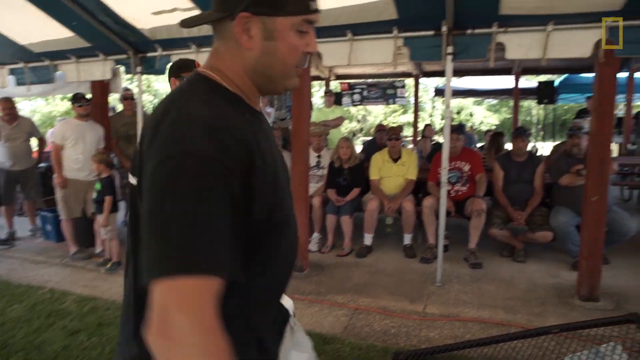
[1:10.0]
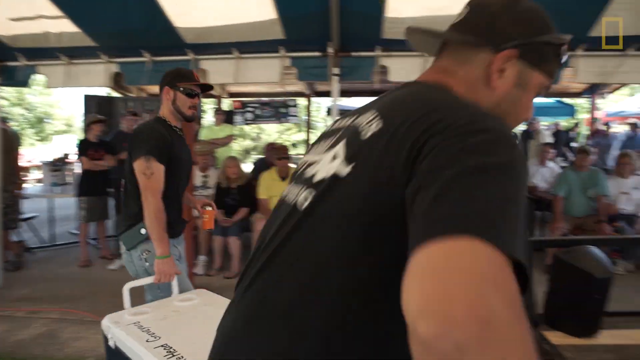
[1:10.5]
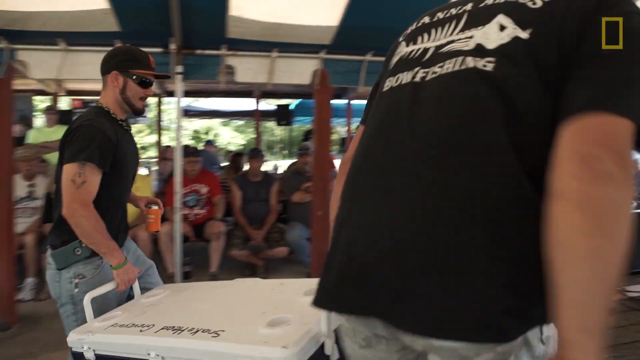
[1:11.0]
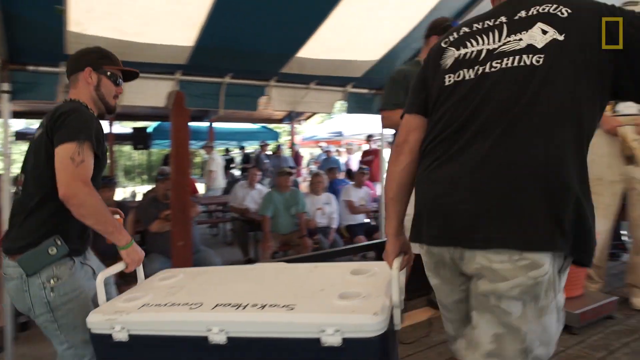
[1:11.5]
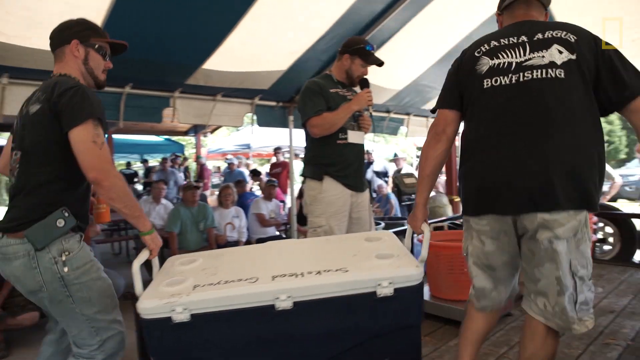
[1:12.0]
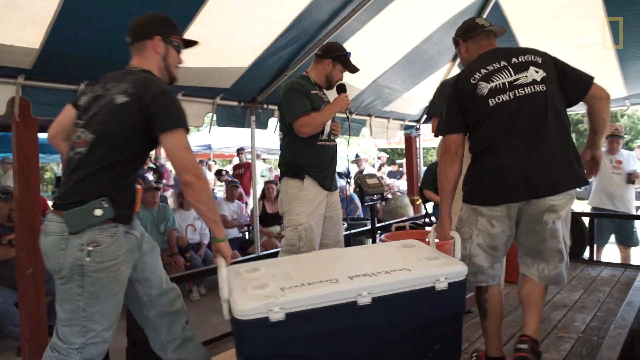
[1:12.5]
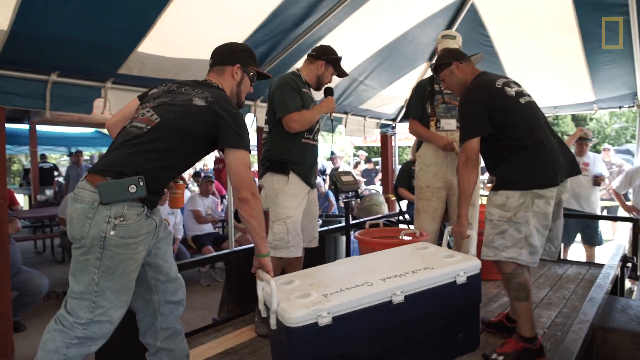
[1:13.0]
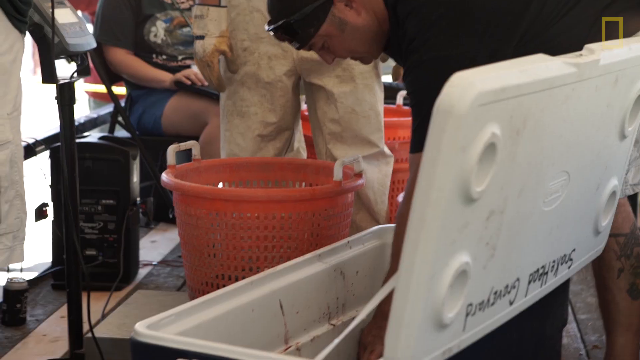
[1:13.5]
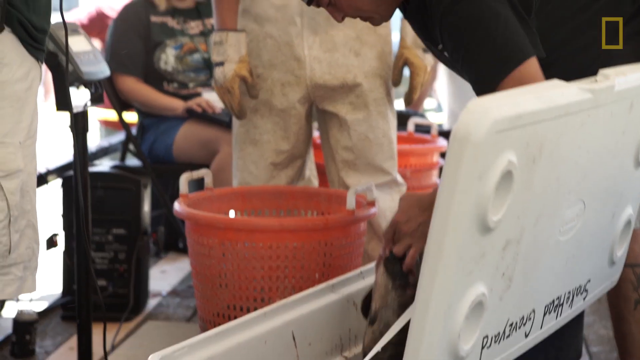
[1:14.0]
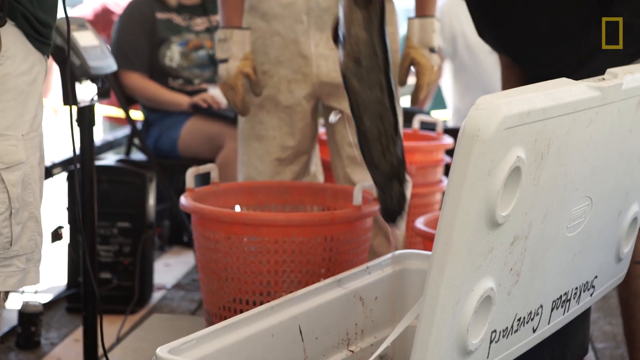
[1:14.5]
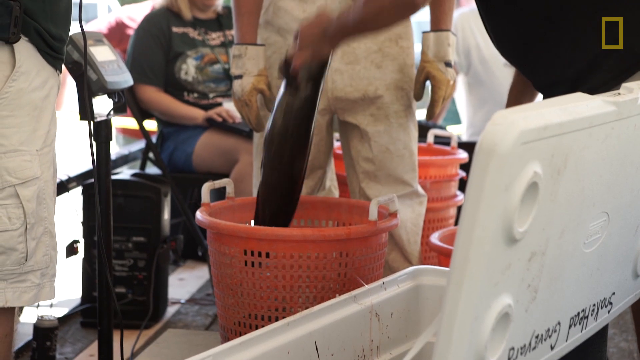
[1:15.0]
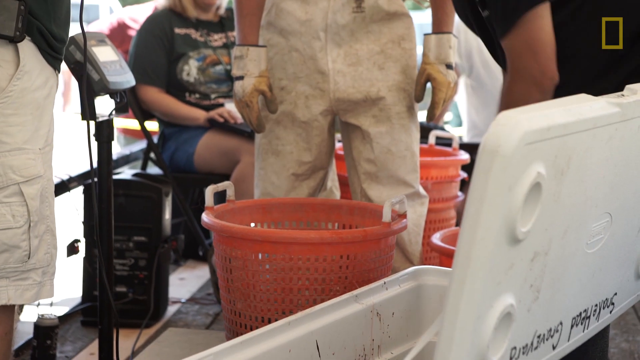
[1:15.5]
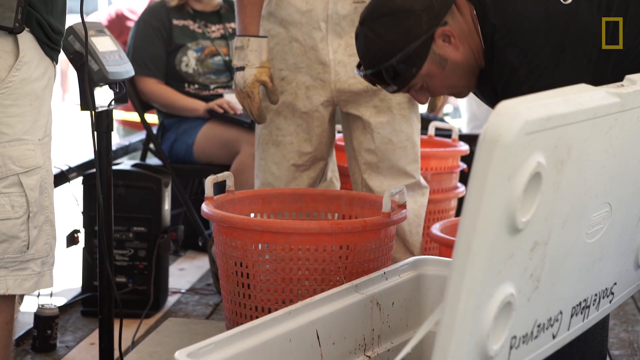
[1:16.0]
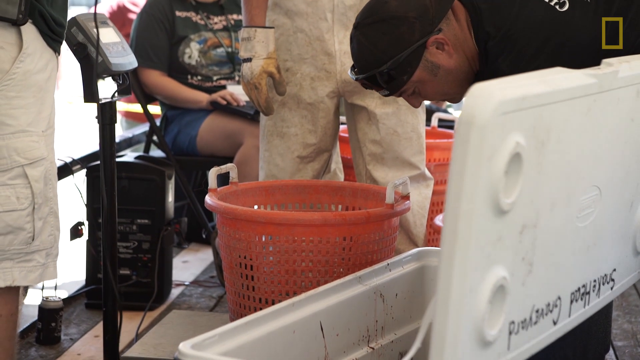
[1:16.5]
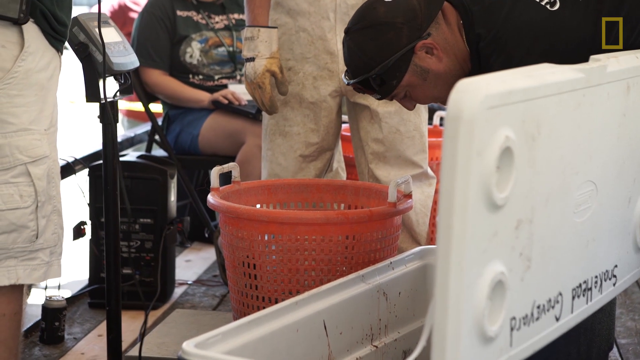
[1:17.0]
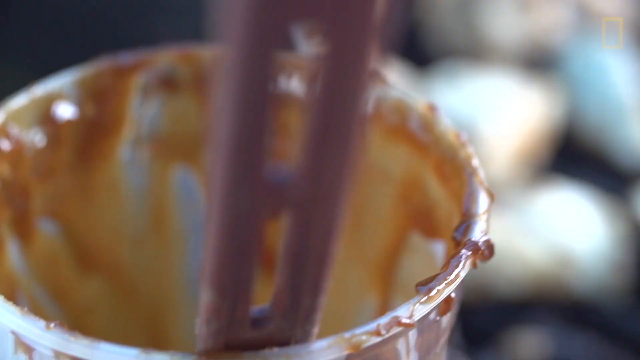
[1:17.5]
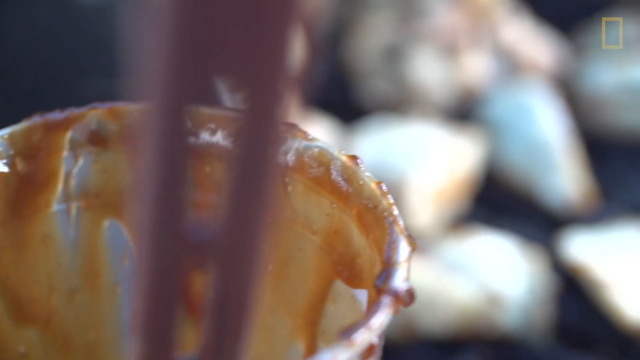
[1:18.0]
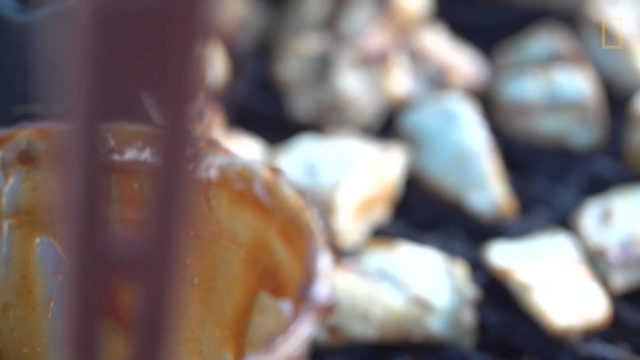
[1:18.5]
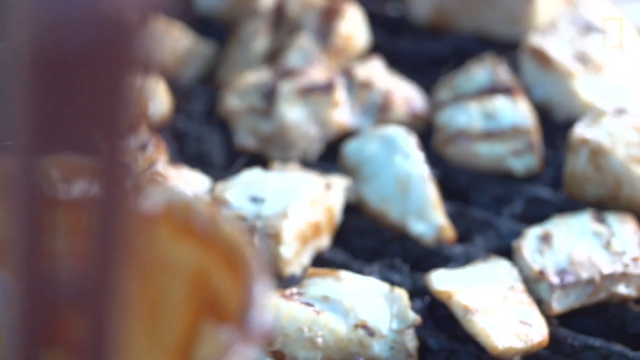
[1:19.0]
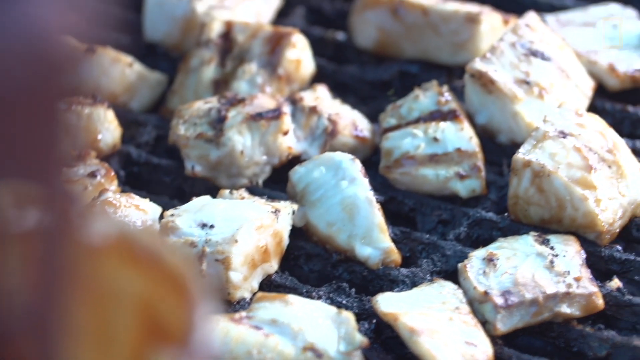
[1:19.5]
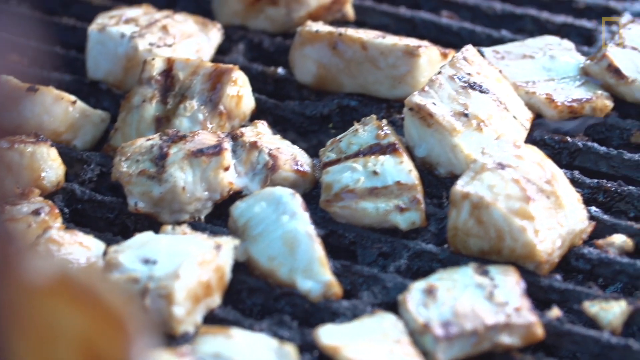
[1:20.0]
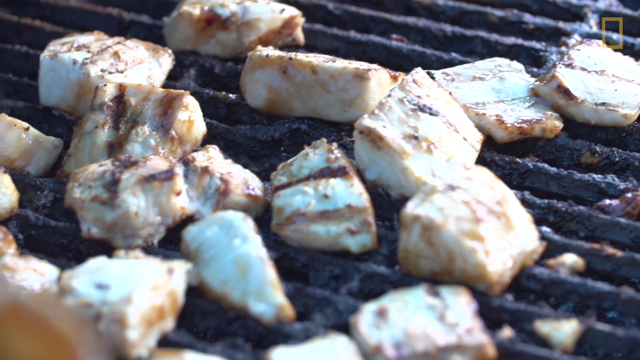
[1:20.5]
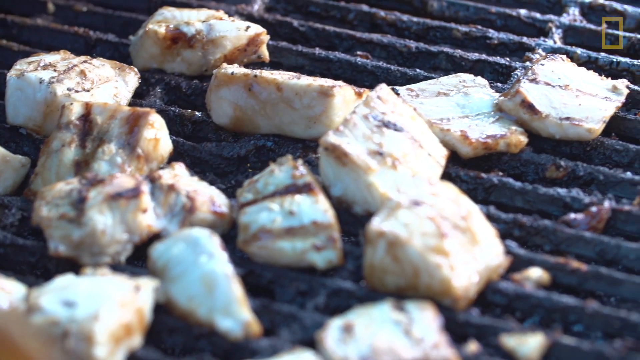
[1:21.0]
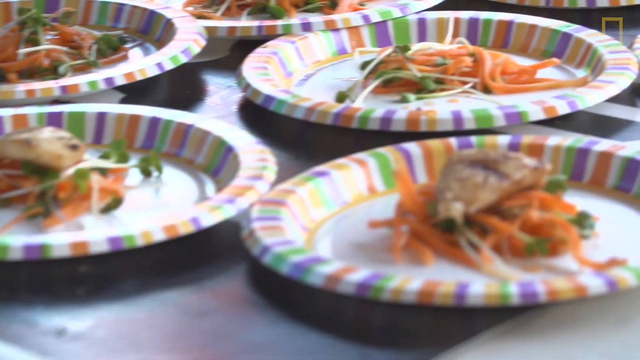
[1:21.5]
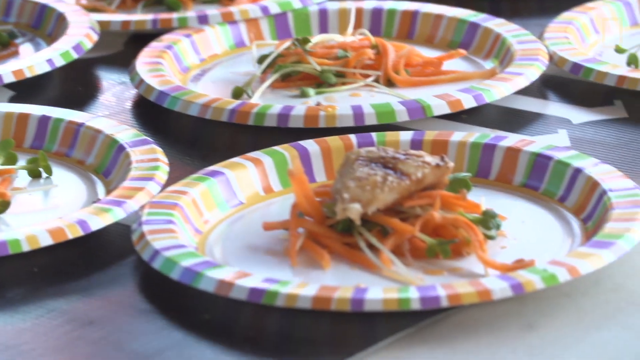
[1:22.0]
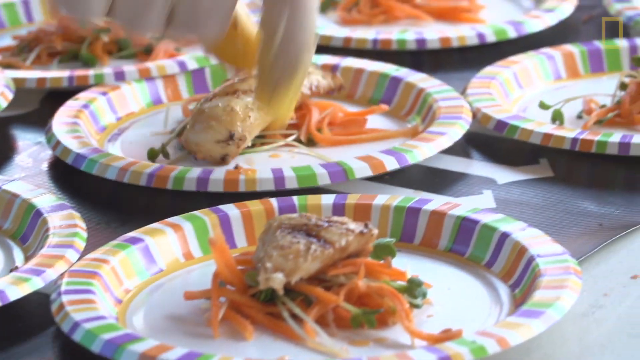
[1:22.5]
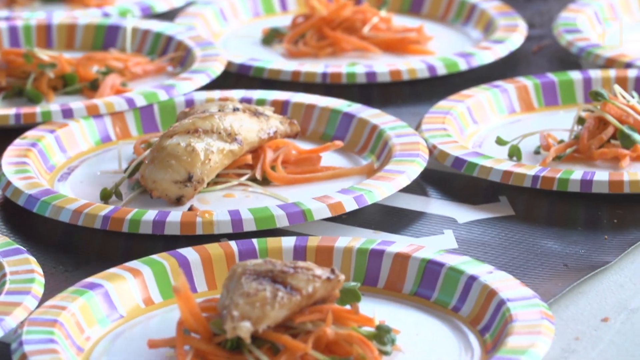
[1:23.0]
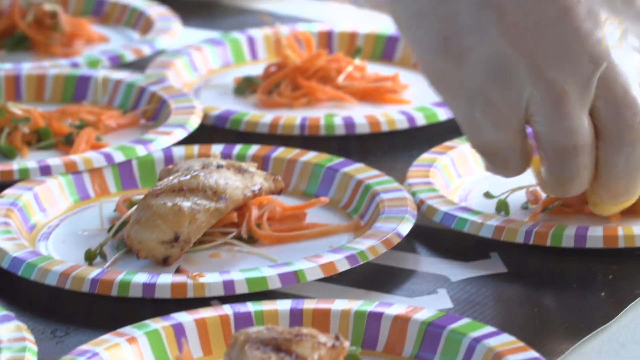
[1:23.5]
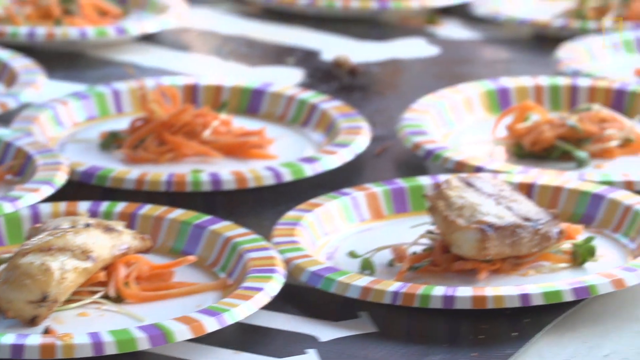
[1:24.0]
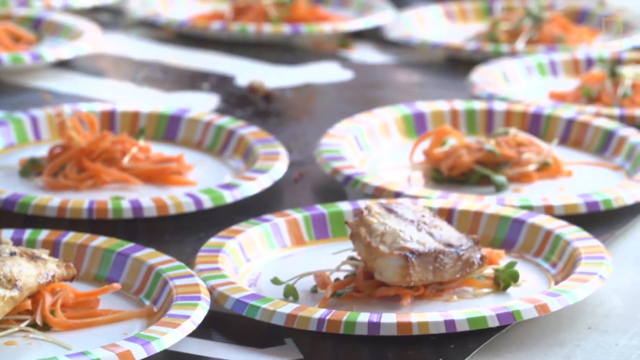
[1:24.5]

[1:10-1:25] The men are in the water catching the fish; they spear it and bring it up onto the boat, and the fish's mouth is opened. The scene then moves to the Potomac Snakehead Tournament, where people are evidently bringing in their catches, including some guys with a cooler carrying fish they have caught.